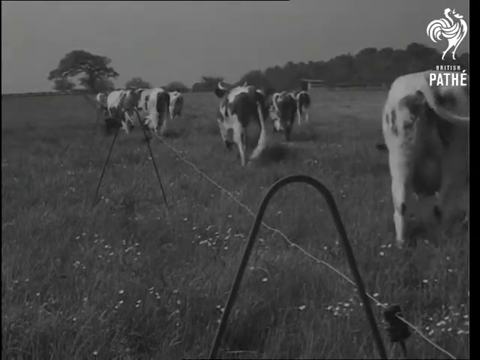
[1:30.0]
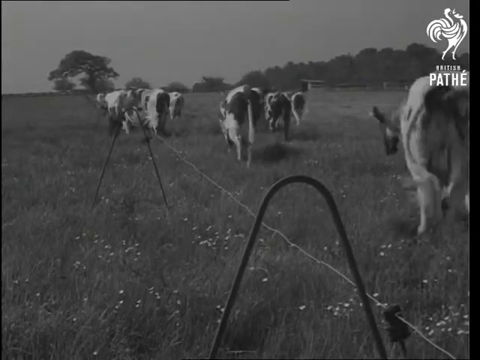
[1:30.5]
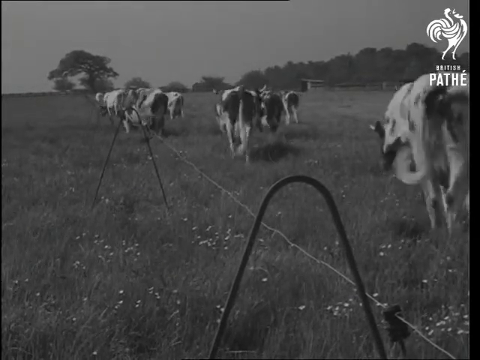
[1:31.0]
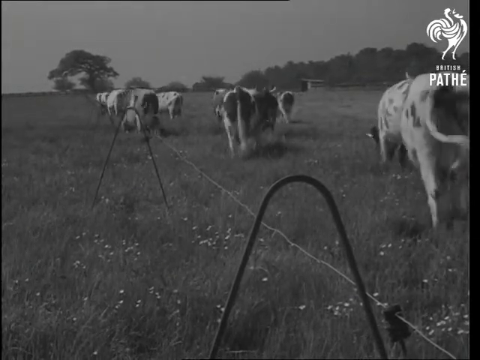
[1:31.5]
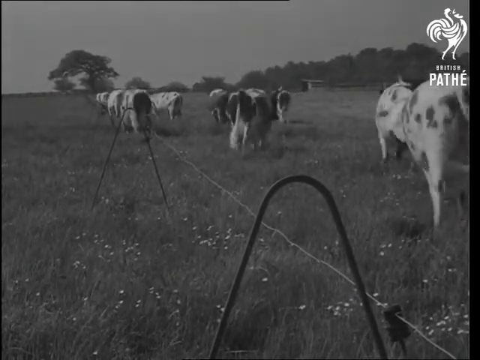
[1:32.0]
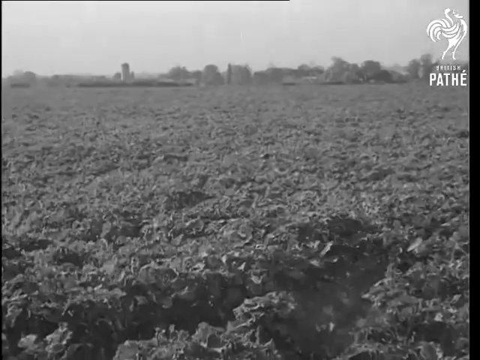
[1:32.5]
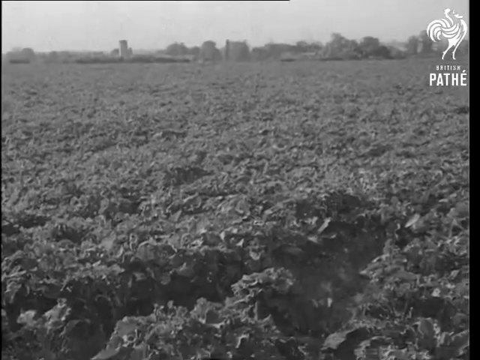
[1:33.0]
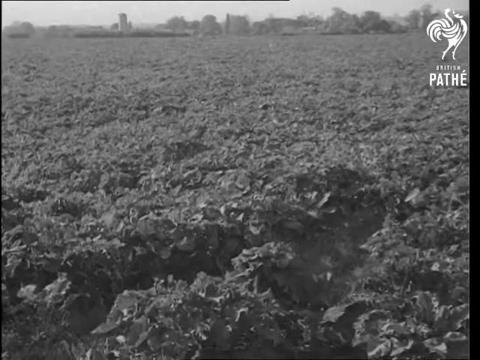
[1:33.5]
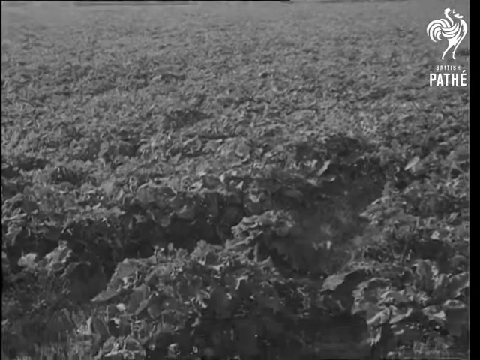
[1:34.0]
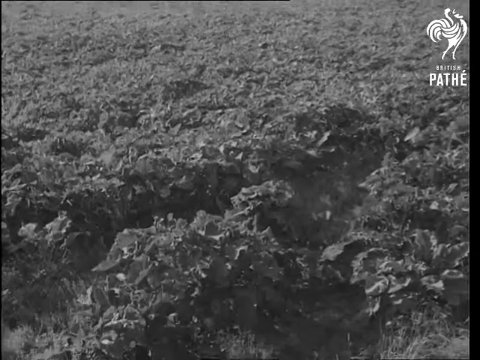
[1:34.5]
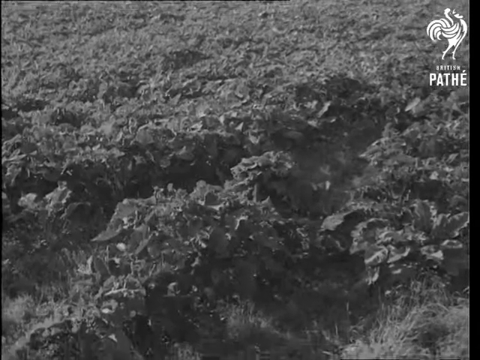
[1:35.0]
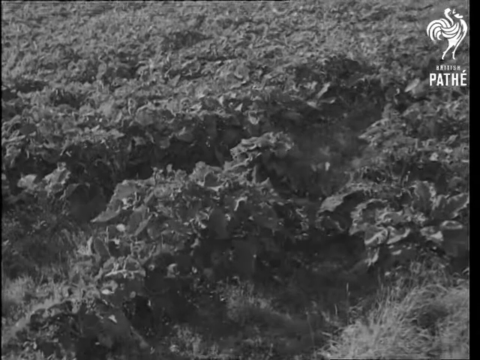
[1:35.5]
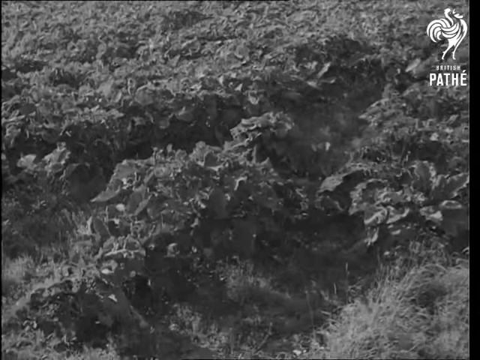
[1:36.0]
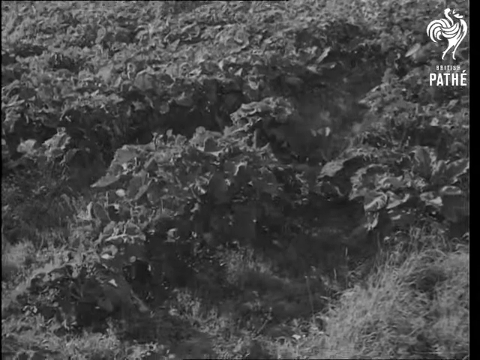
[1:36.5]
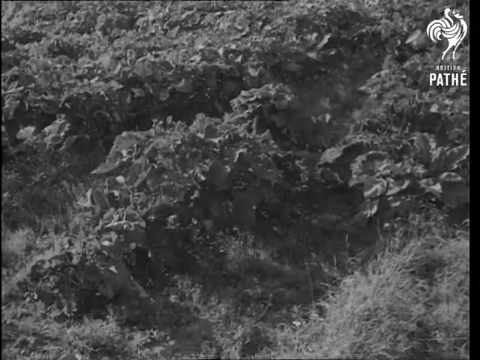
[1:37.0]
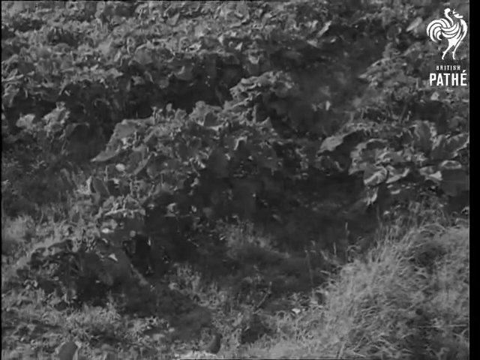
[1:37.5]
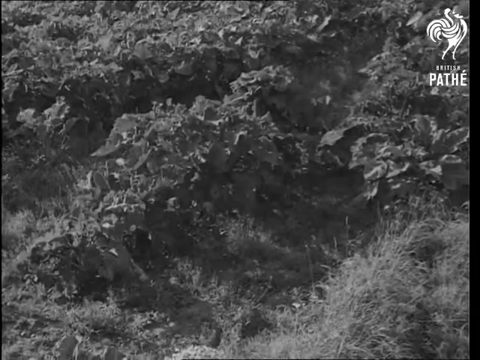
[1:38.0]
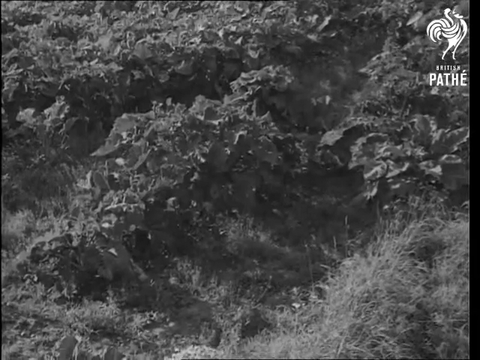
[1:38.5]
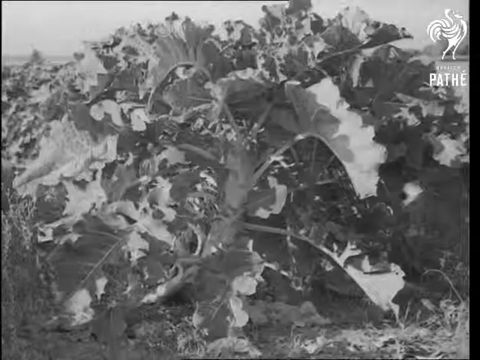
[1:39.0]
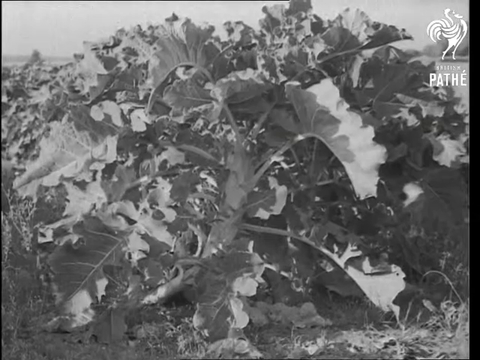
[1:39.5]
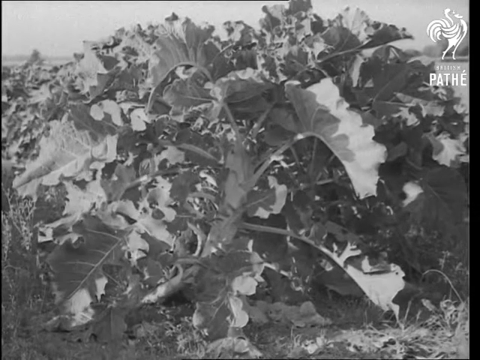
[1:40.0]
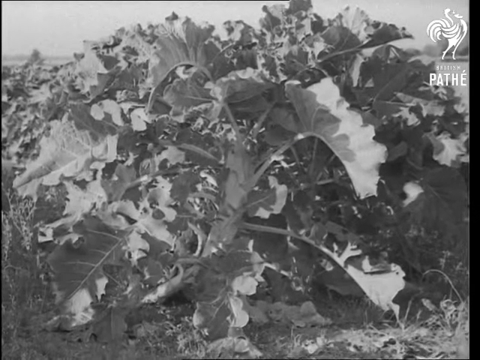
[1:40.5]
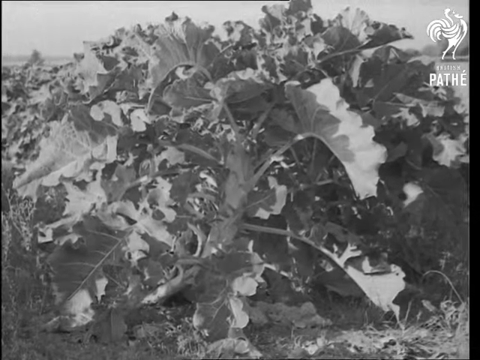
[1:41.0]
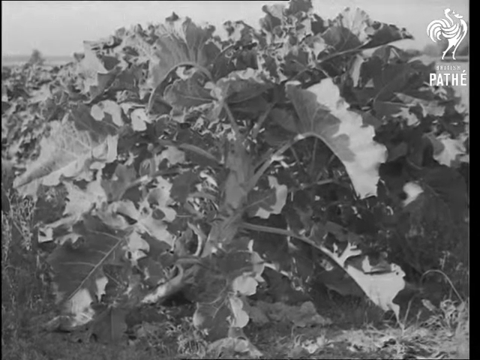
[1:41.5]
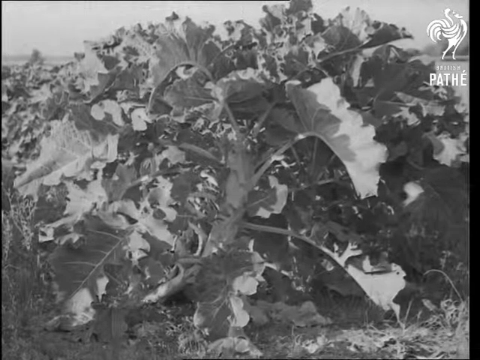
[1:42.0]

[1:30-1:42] The cows are seen from behind, with the wire barrier to their left and a lot of open space around them; they appear to be grazing on the grass in the field. The footage cuts to something on the ground, and as the camera pans down a bit it turns out to look like leaves, some type of leafy green, possibly being grown on the farm. A close-up shows the plant, which is leafier than a bush, coming out of the ground, with many stems coming off of it and large leaves.